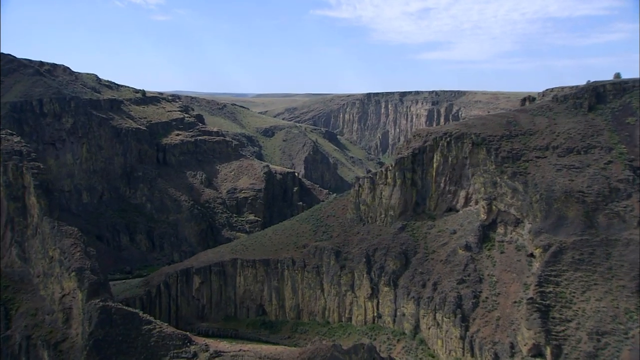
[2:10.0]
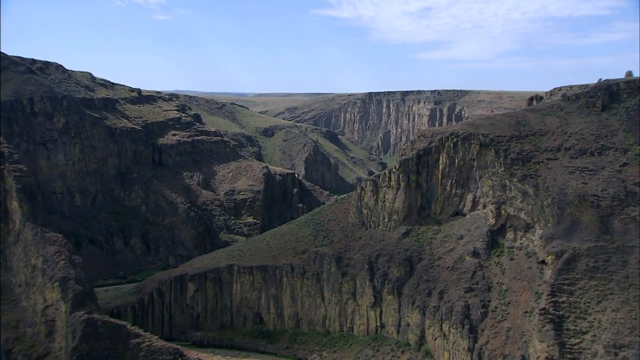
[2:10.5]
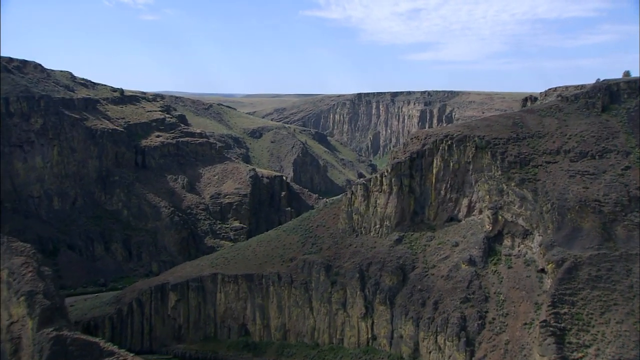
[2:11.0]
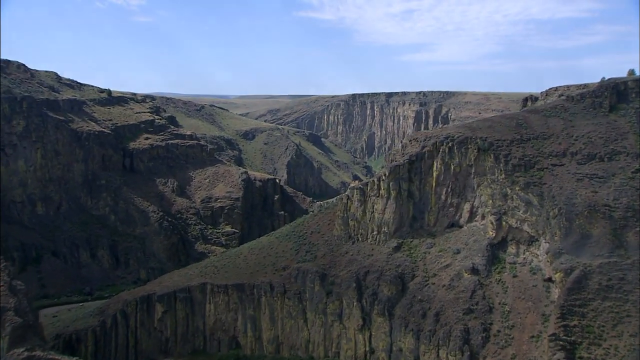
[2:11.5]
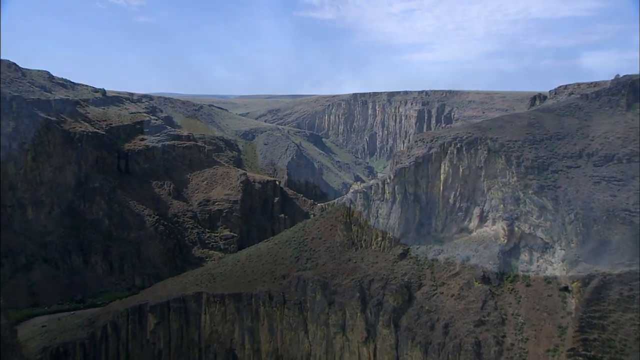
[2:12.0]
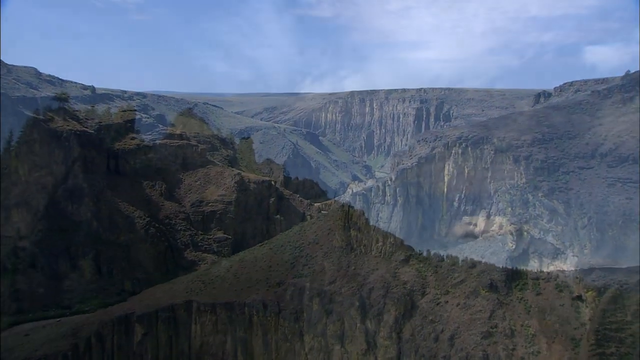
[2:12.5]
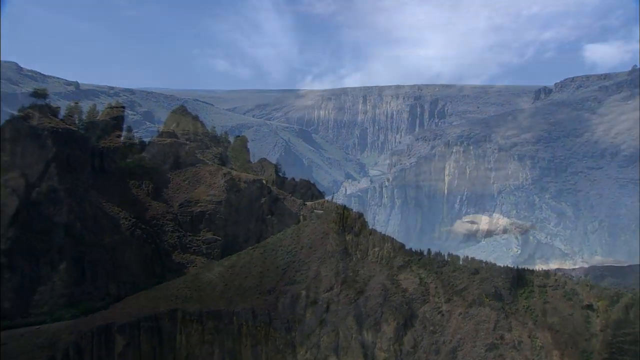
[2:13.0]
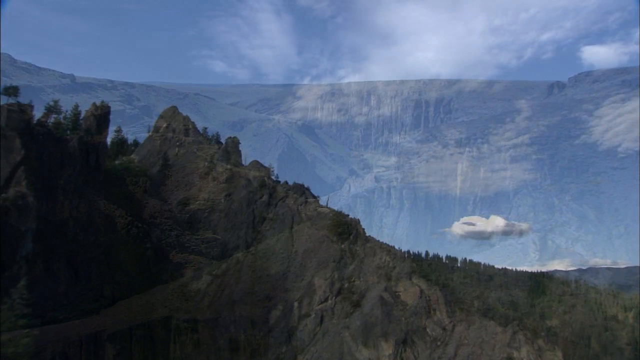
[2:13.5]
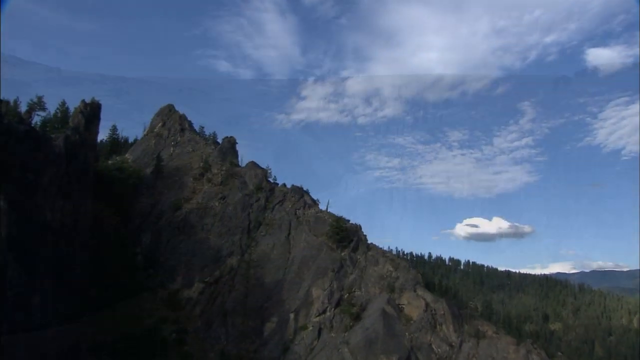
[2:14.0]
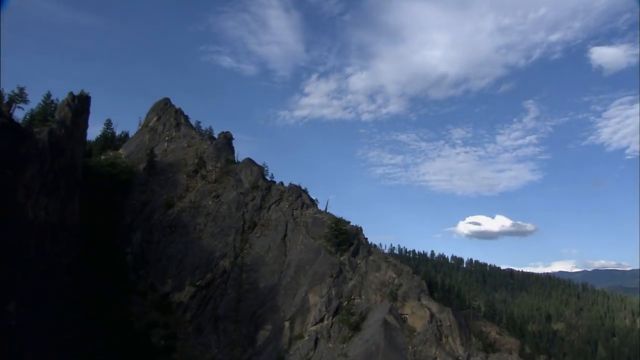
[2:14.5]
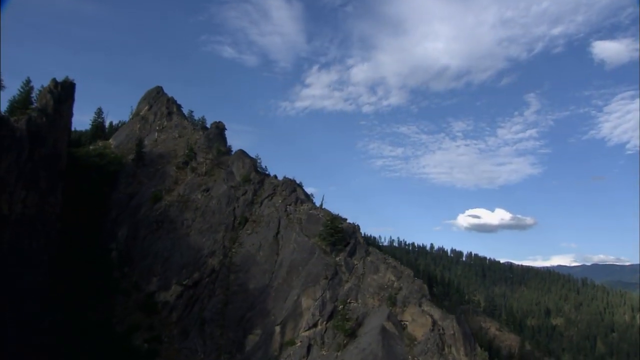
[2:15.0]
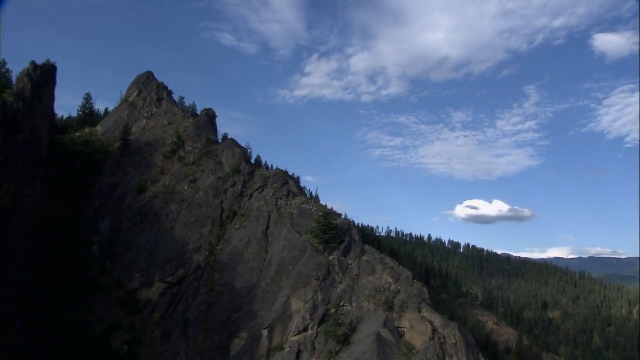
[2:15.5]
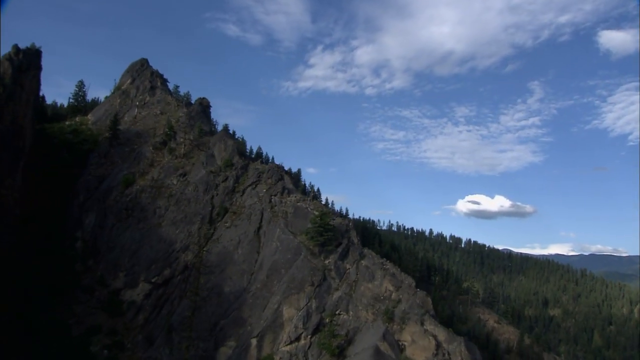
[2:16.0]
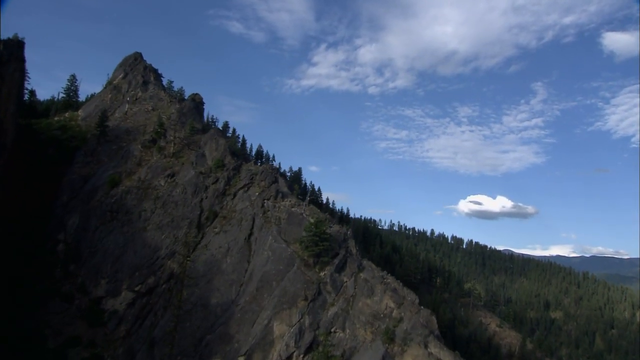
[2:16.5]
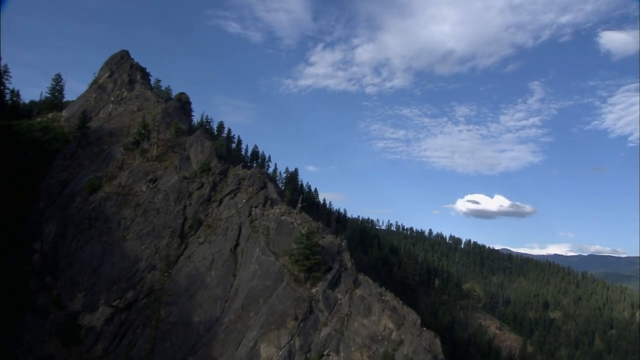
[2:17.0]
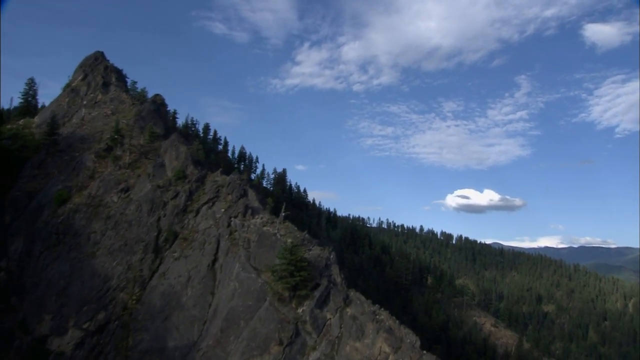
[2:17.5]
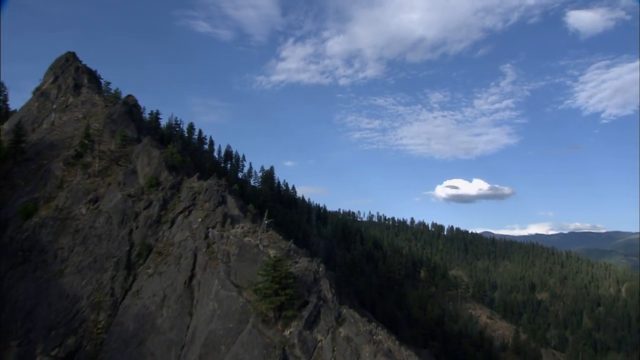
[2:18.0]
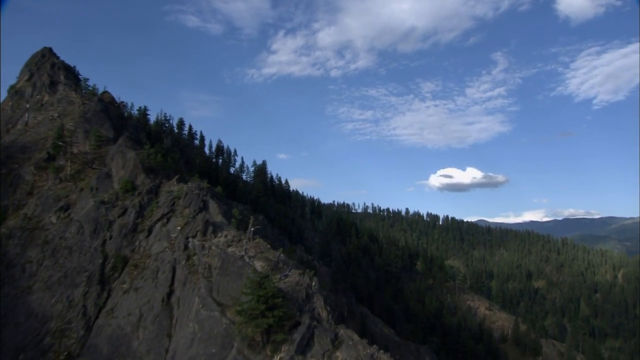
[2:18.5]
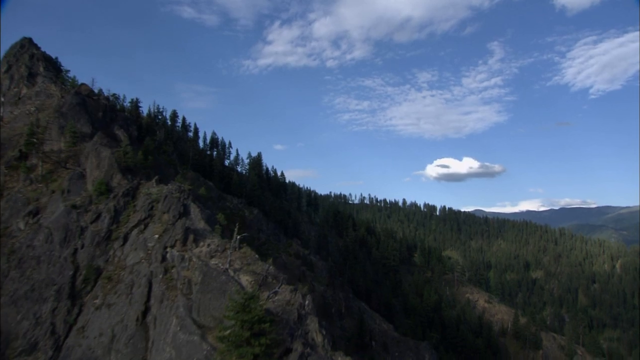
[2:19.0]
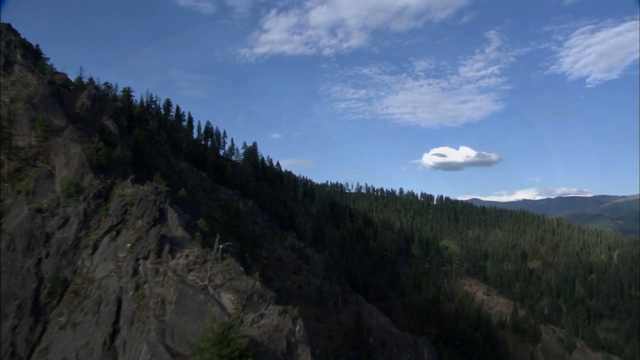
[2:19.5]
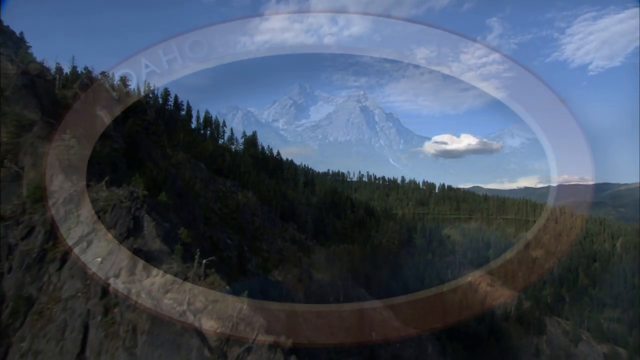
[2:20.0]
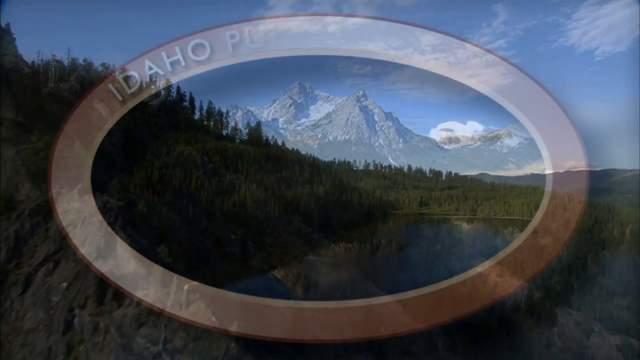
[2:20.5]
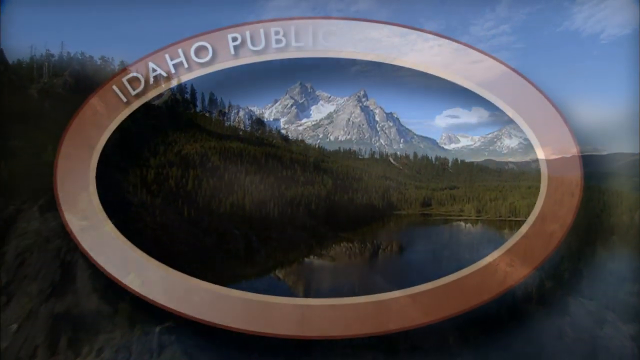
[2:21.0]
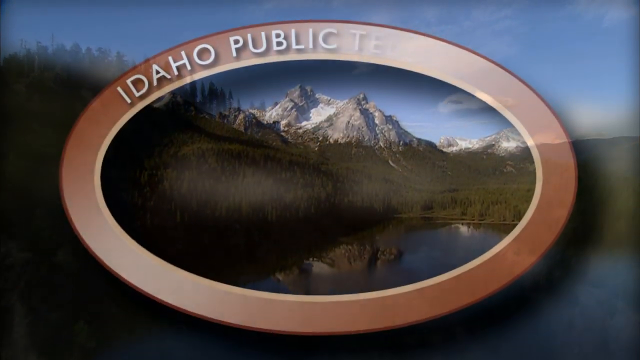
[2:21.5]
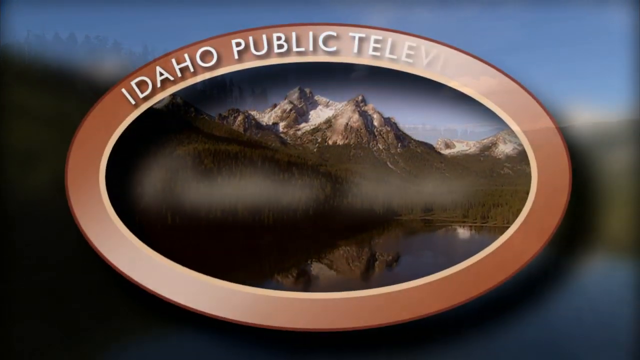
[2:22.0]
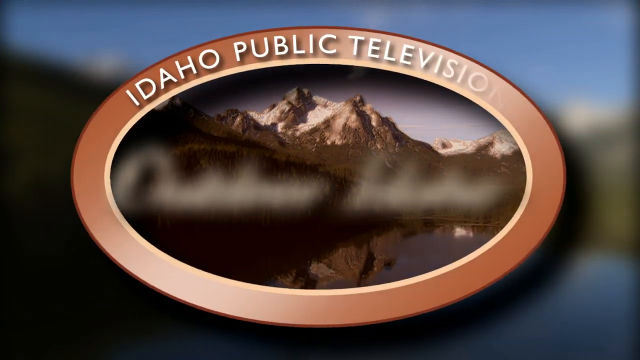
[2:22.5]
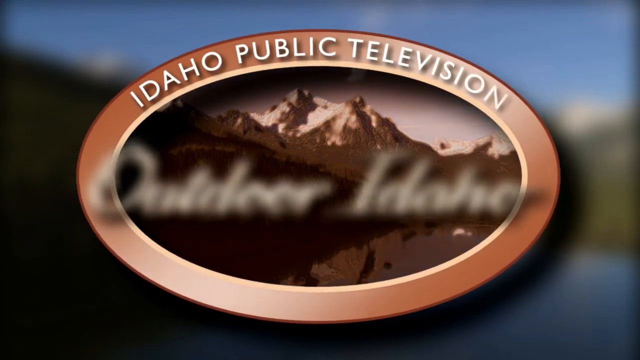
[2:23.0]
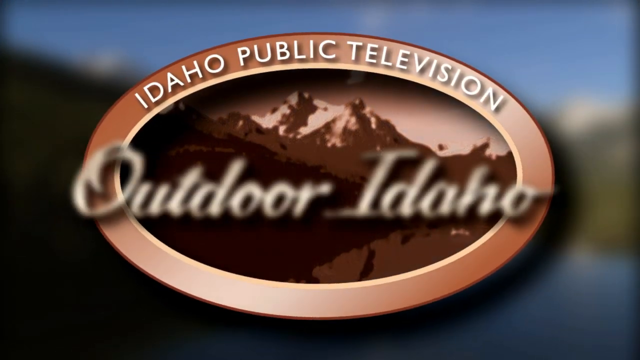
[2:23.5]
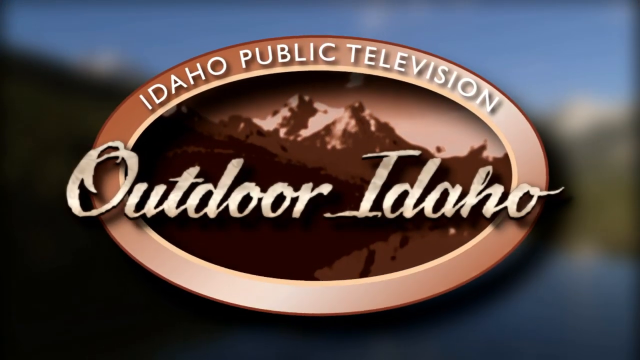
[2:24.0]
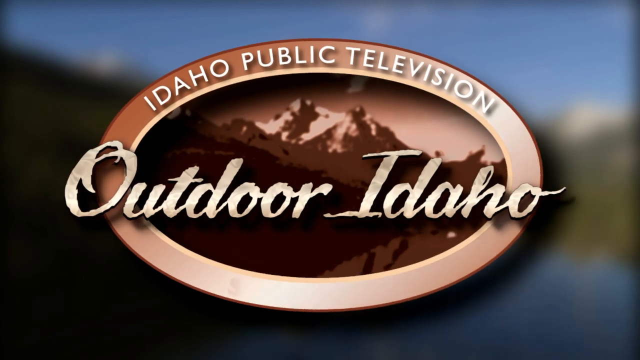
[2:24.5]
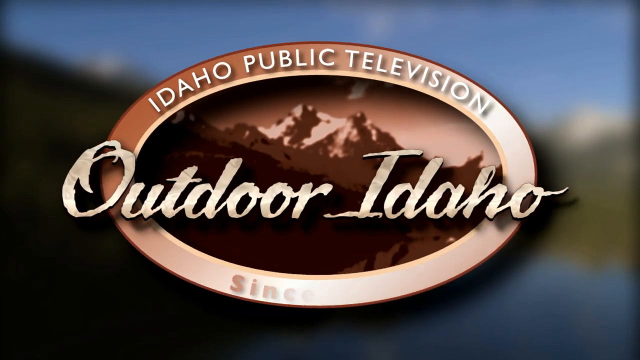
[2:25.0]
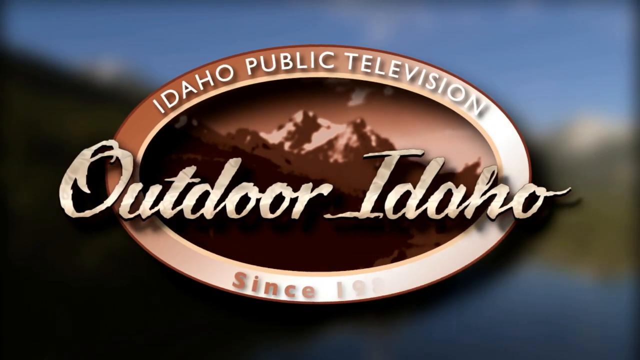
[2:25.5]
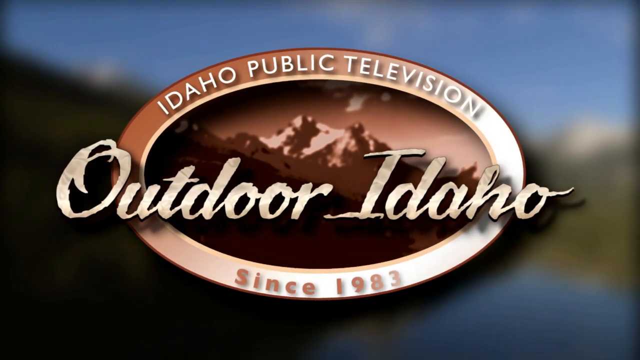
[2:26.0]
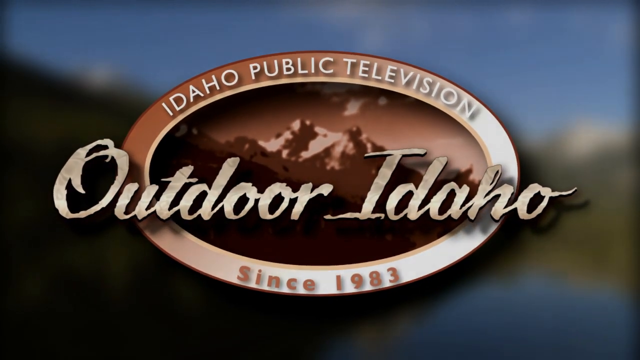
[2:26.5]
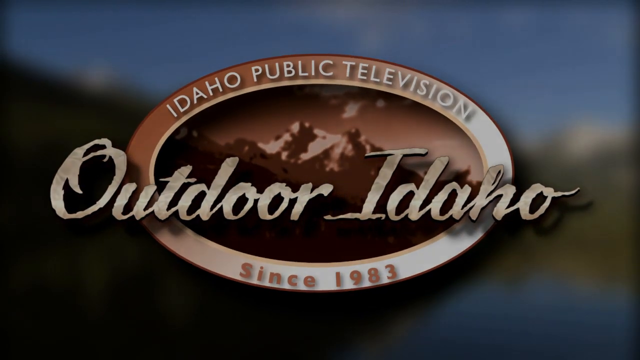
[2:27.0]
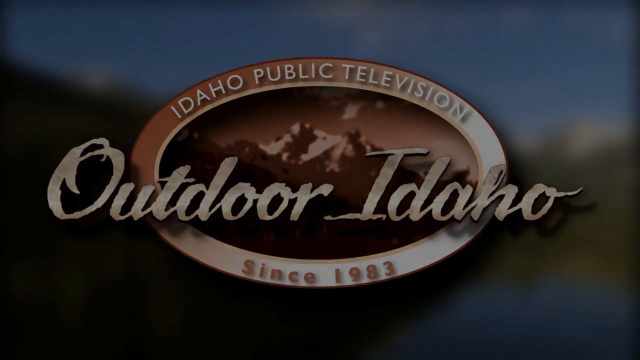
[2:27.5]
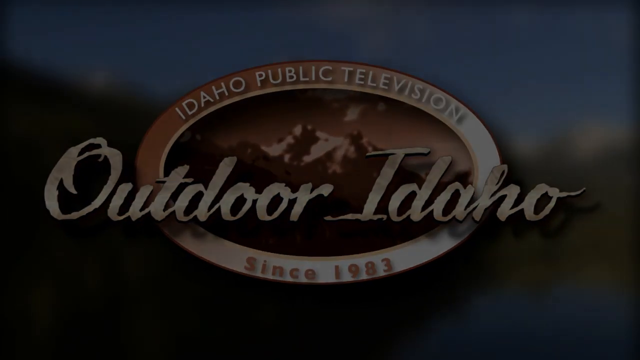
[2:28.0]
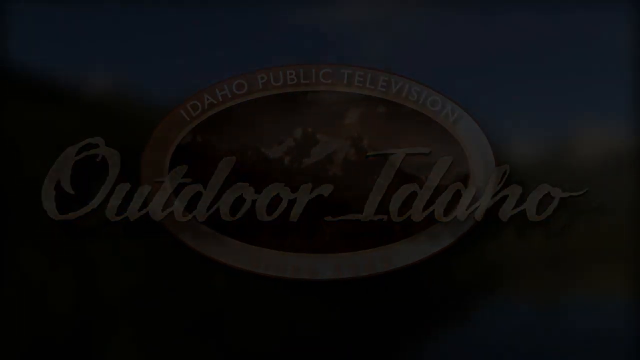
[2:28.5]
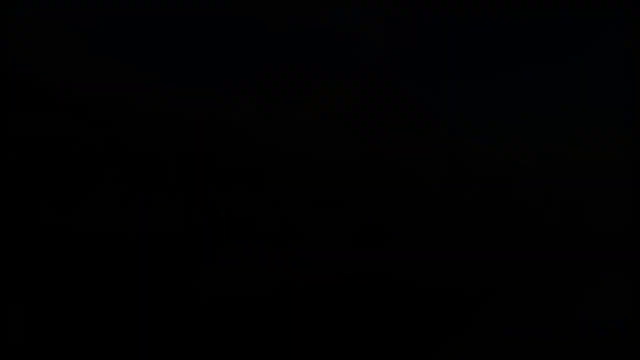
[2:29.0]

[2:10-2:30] The camera moves inward through the mountainous area, then switches to a drone moving upward over similar scenery, this time with lots of trees over the mountain; the tops of many trees extend all the way up to the left corner of the screen. The sky in the distance is fairly blue with some passing clouds. On the closing screen the background apparently goes blurry, with a ring in the center. At the top, white text reads "Idaho Public Television", below it "Outdoor Idaho" with mountain-like scenery behind, and then "1983" appears quickly. The screen then turns black.